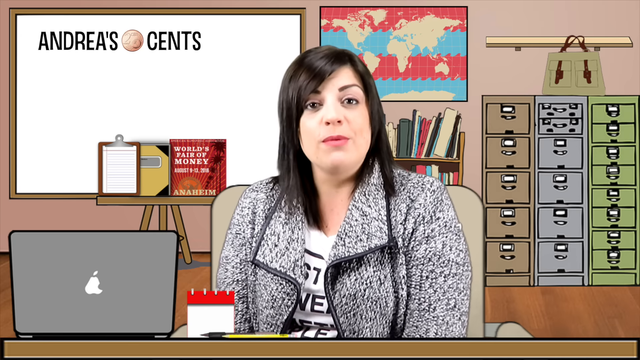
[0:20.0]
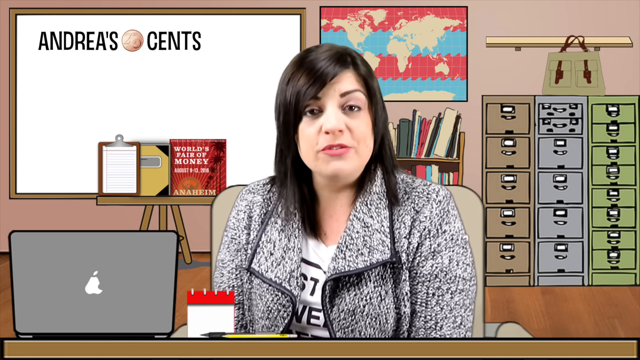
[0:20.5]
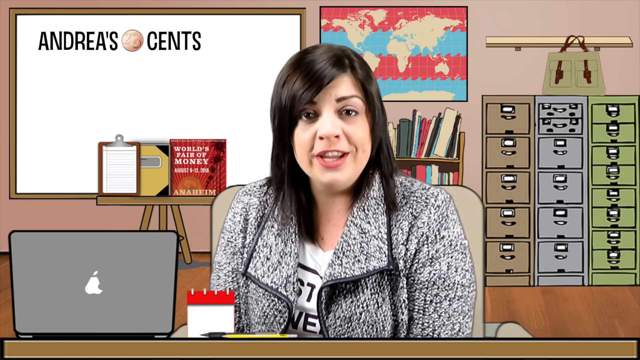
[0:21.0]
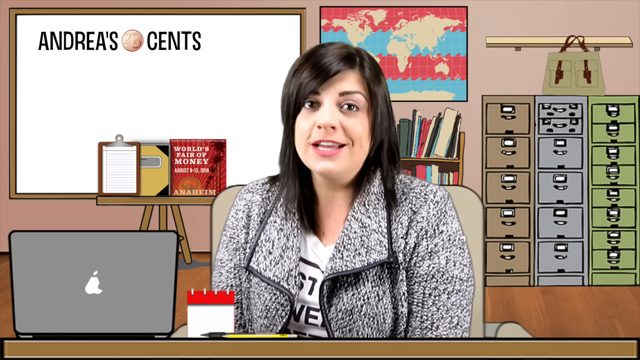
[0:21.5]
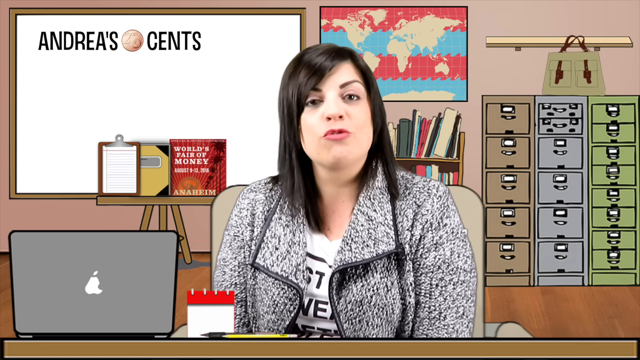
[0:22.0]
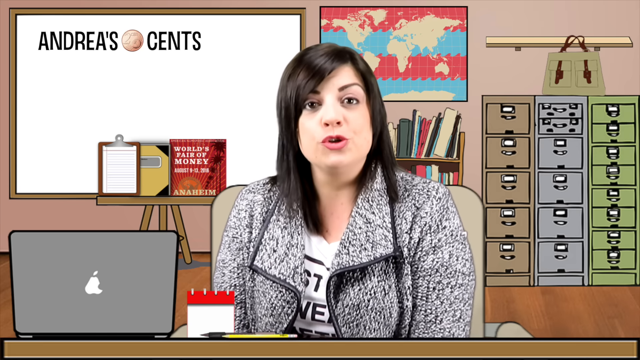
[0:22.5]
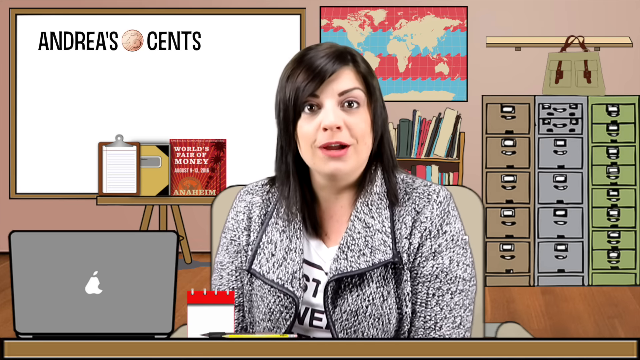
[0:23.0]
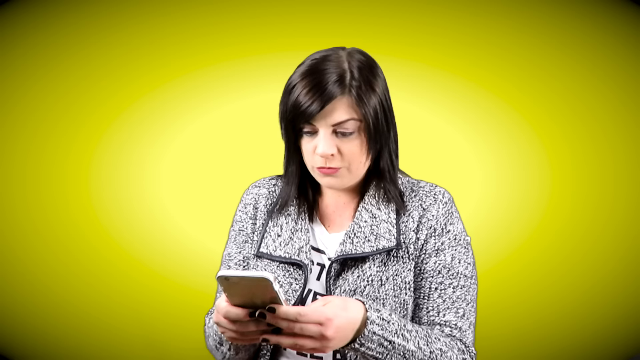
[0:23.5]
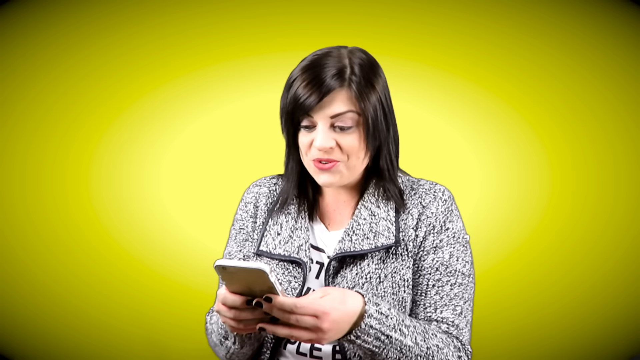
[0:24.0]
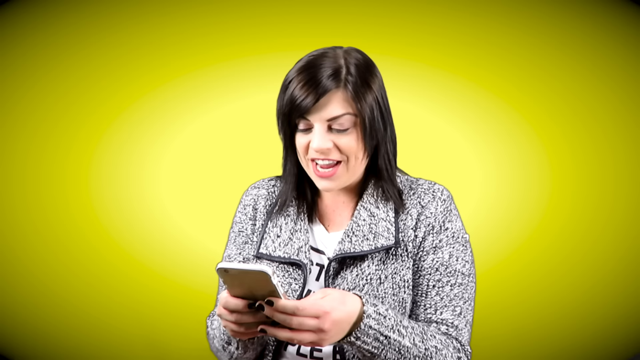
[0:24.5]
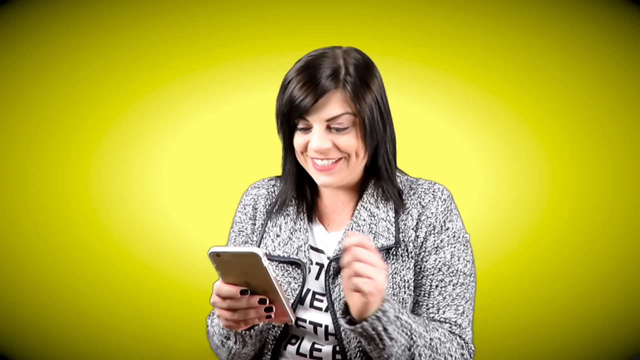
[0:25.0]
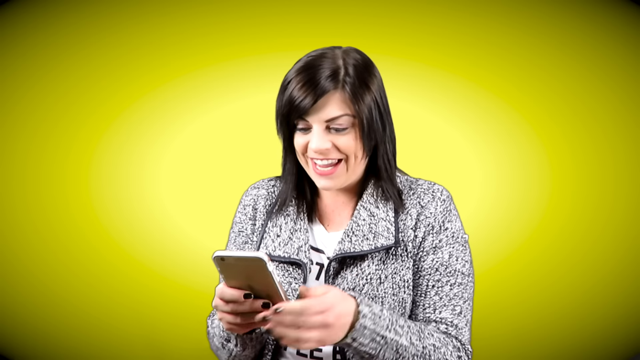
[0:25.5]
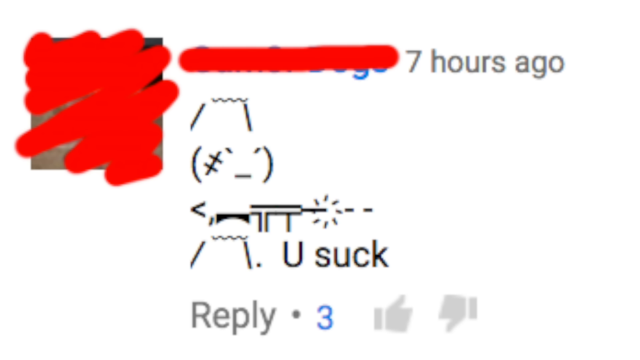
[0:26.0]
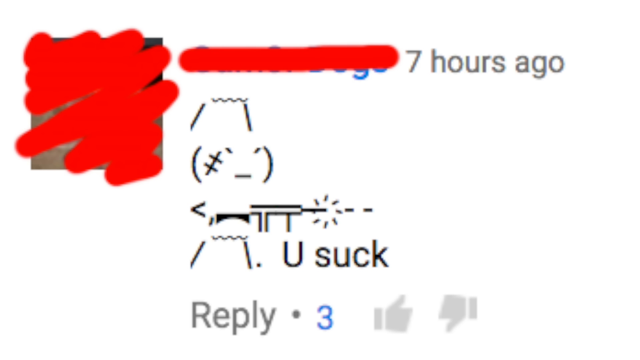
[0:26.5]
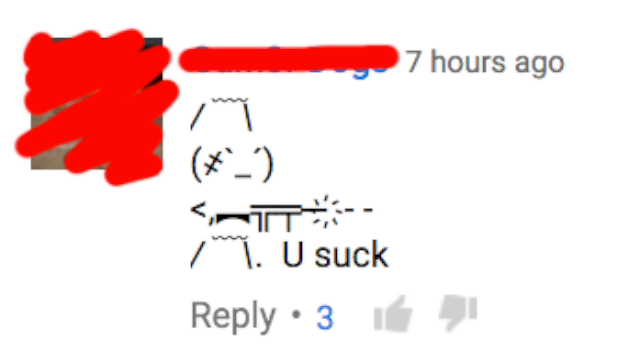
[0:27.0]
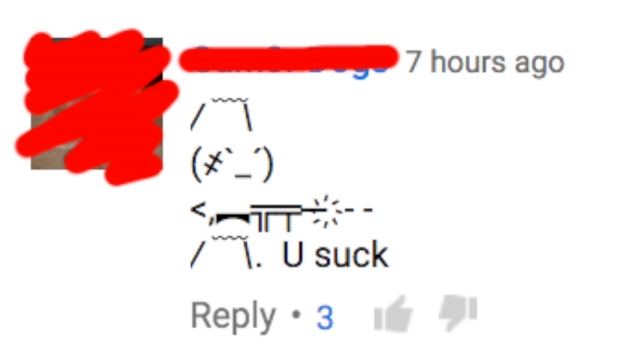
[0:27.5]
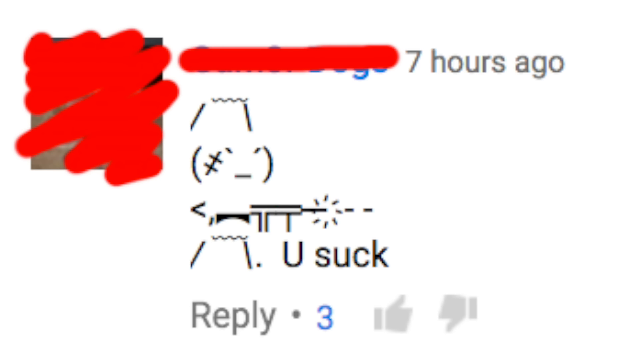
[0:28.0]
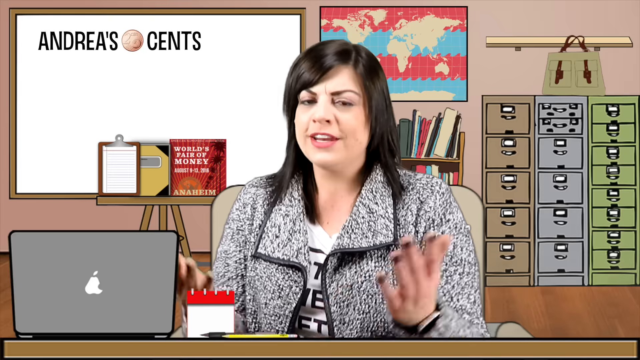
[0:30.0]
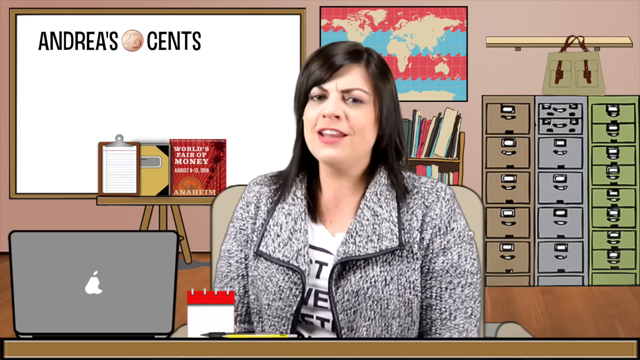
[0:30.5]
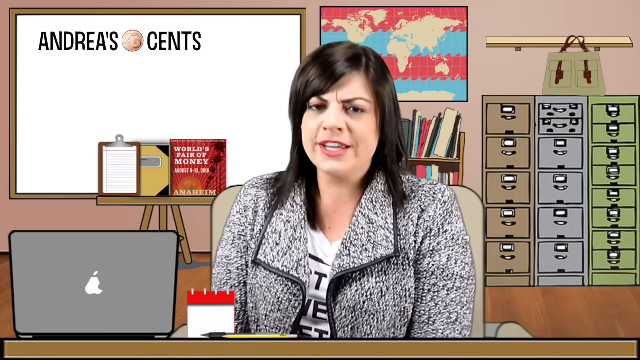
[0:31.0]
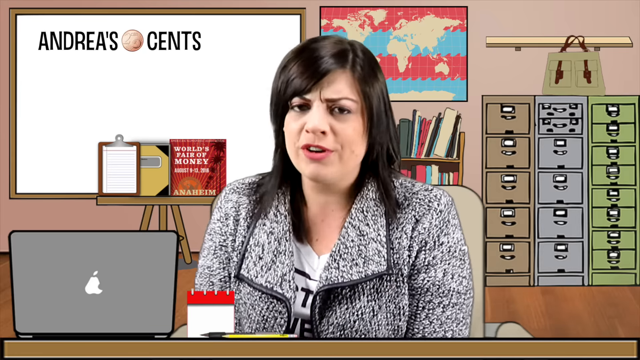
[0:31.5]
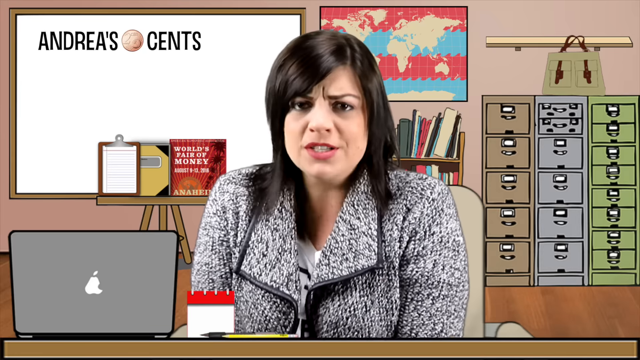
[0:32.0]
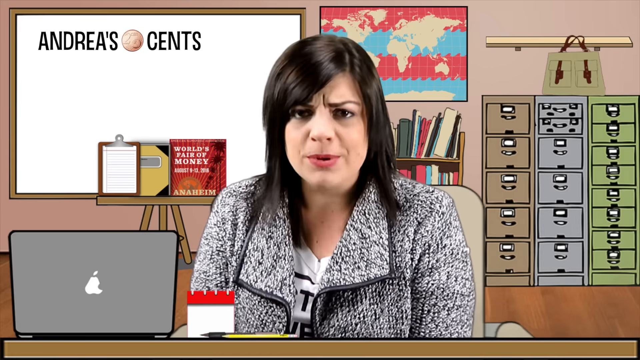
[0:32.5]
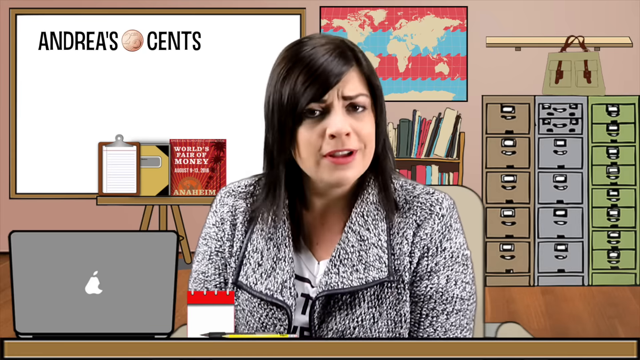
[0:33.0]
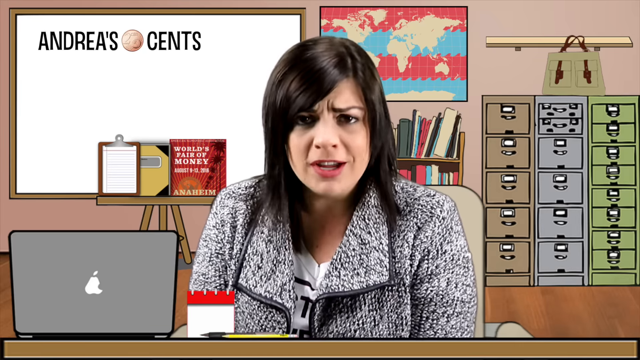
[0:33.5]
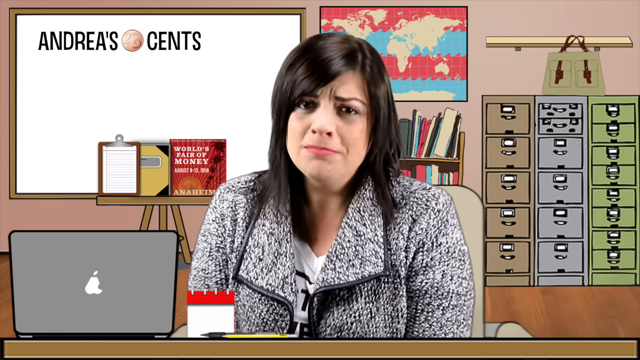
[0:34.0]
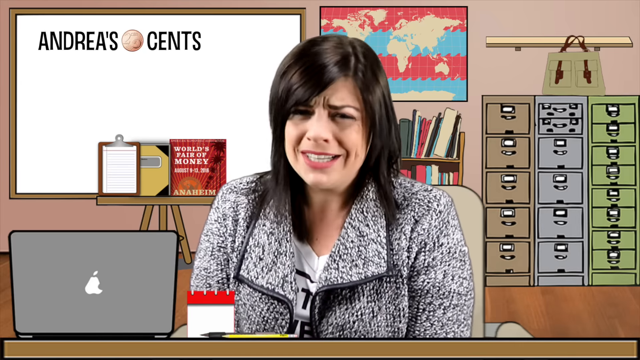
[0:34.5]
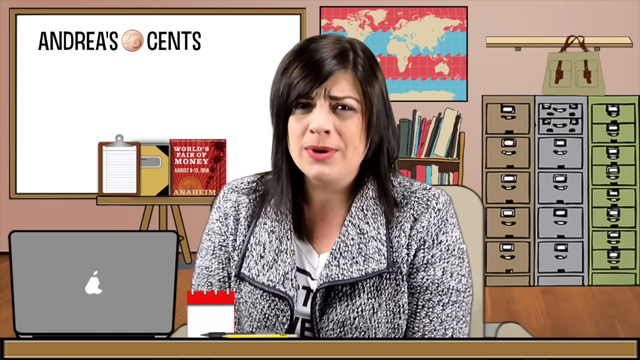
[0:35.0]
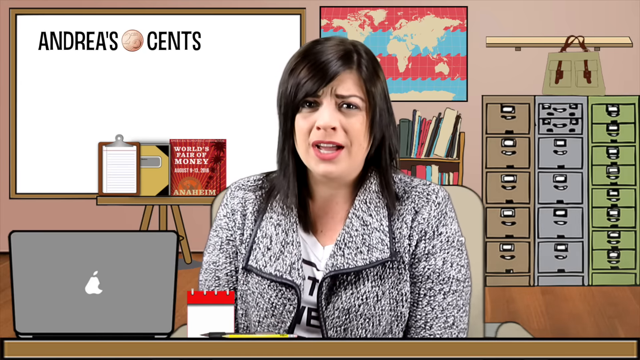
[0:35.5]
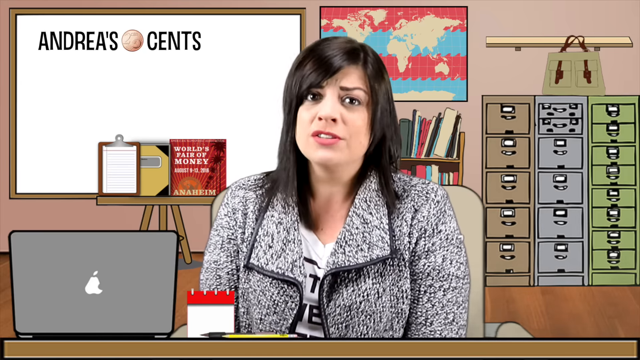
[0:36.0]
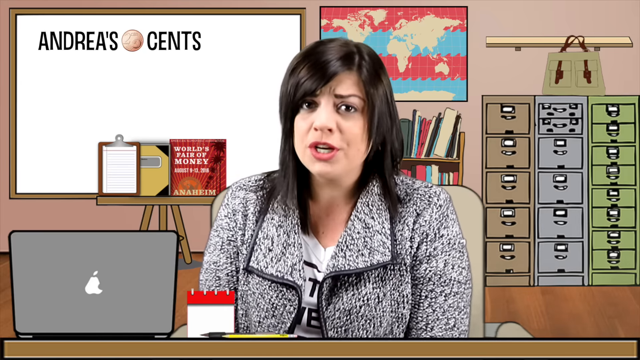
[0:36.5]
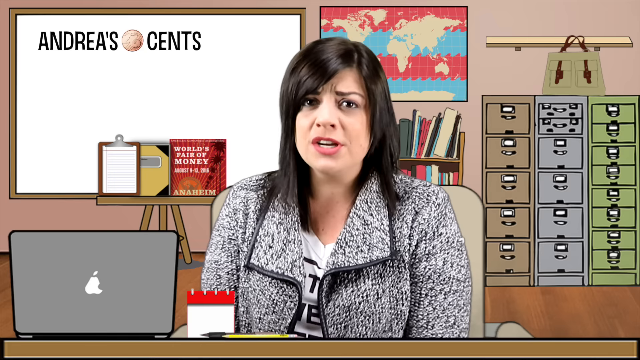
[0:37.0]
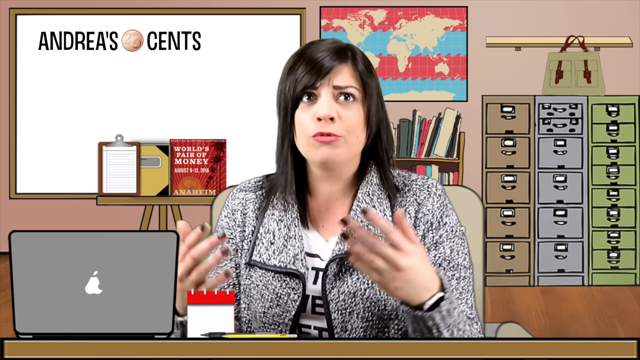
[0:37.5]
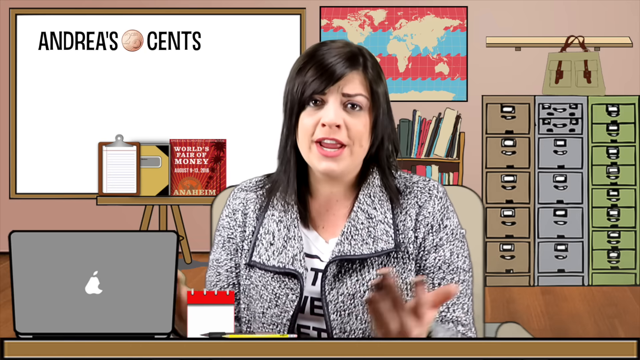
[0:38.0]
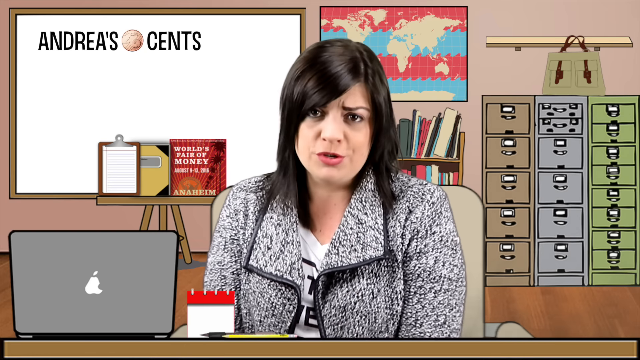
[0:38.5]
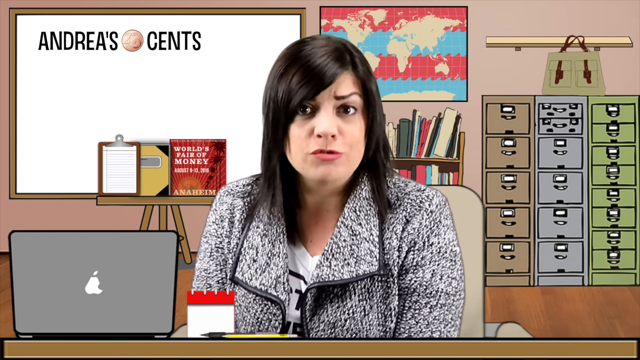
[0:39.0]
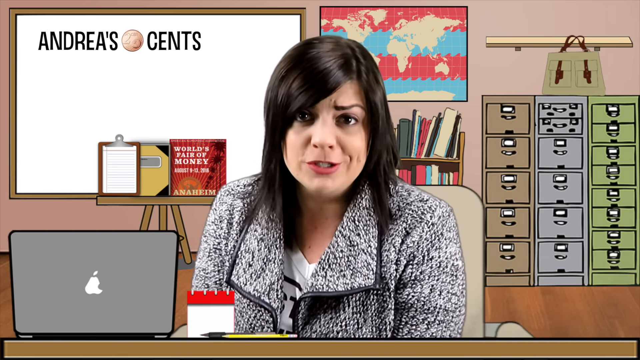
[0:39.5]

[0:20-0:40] The woman, Andrea, appears in a cut-out scene with only a green background with some yellow light spots in the middle behind her and nothing else. She holds a gold iPhone, has black nail polish on her fingers, and smiles as she talks to her phone. A Facebook comment made 7 hours ago is shown, with the username and profile picture both hidden with a red marker. The comment is an animated character holding a gun, drawn using signs, and it says "you suck." The comment has 3 likes. The scene then switches to Andrea talking about the comment, gesturing a lot with her hands, in a scene like an office with an animated background.